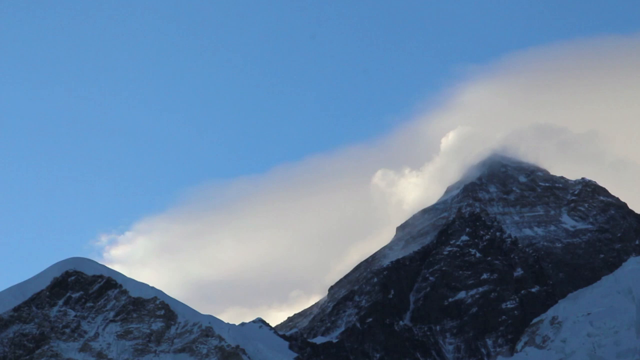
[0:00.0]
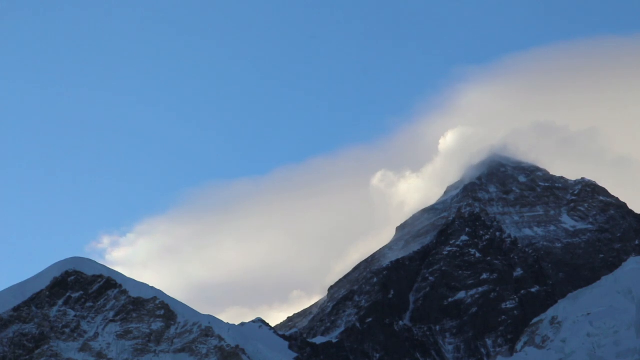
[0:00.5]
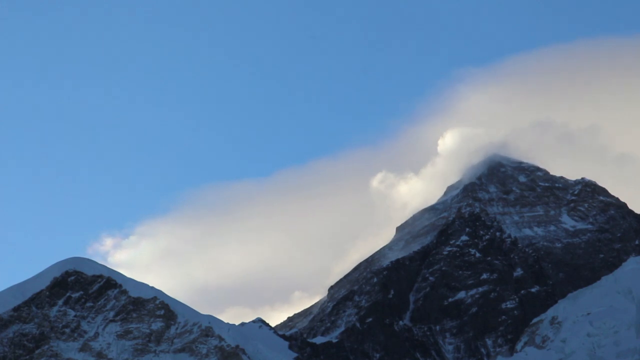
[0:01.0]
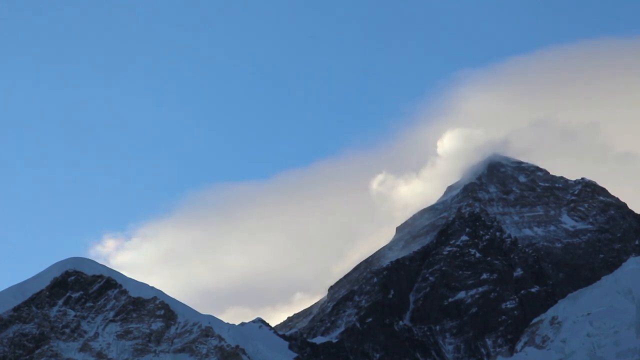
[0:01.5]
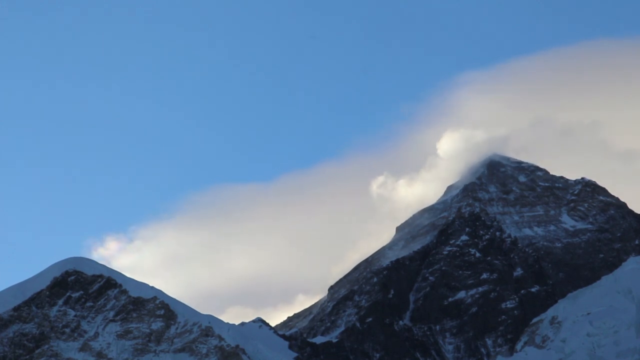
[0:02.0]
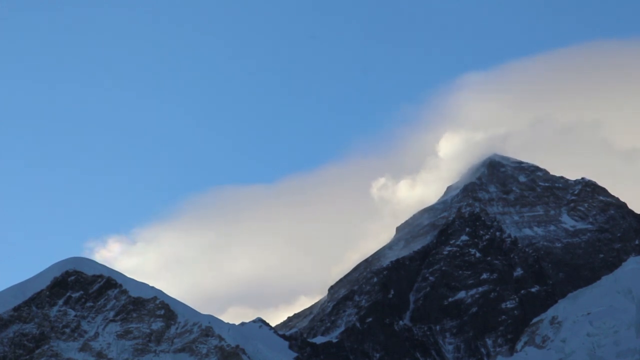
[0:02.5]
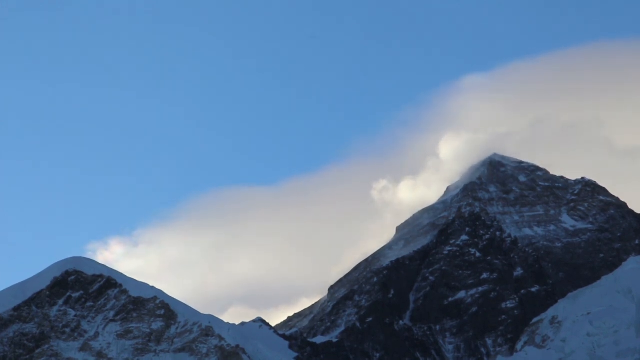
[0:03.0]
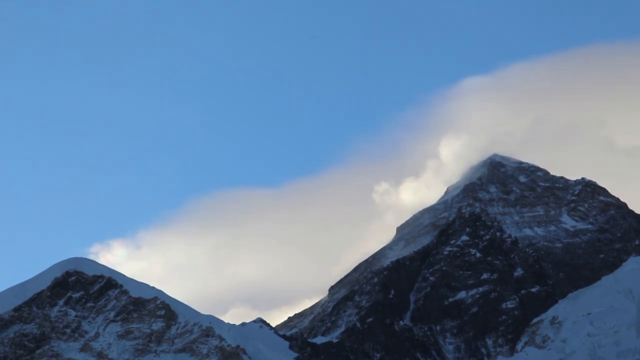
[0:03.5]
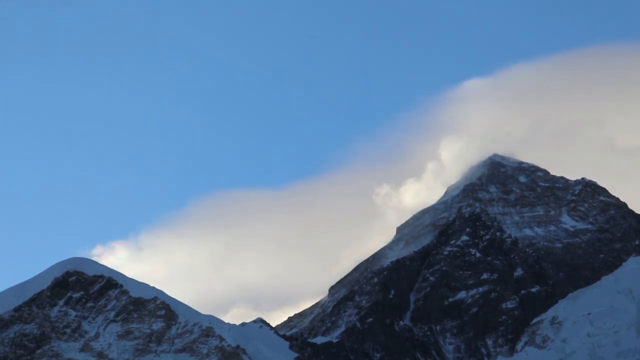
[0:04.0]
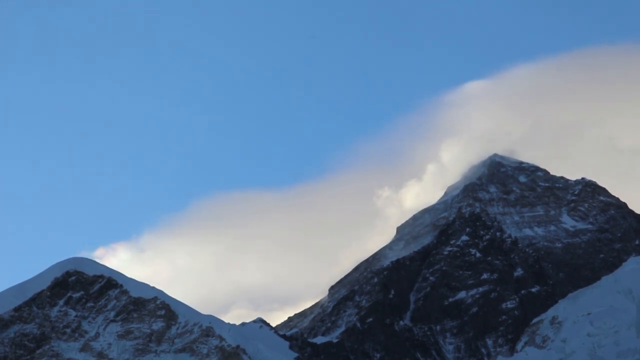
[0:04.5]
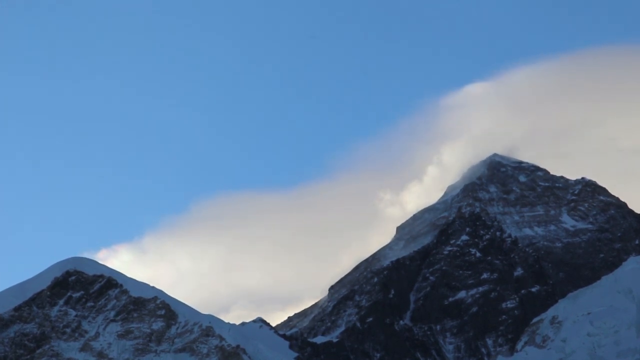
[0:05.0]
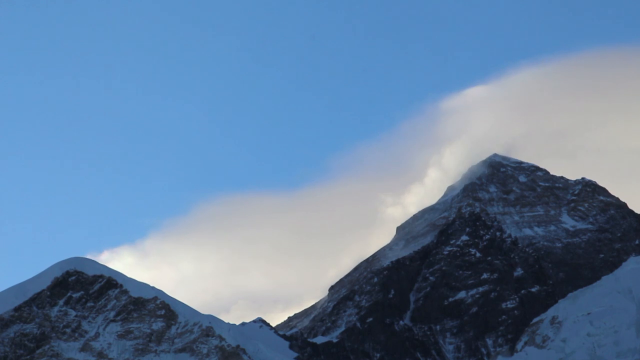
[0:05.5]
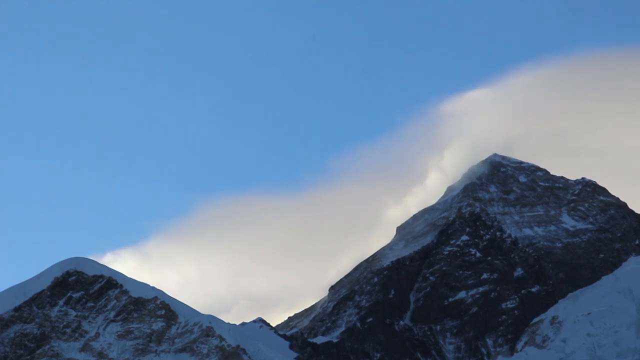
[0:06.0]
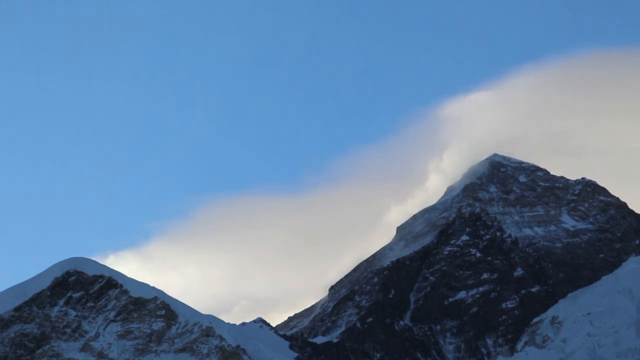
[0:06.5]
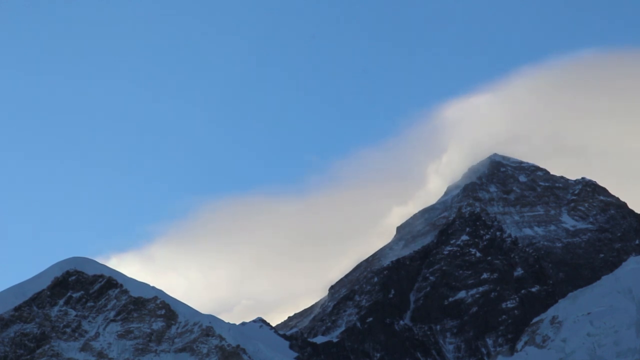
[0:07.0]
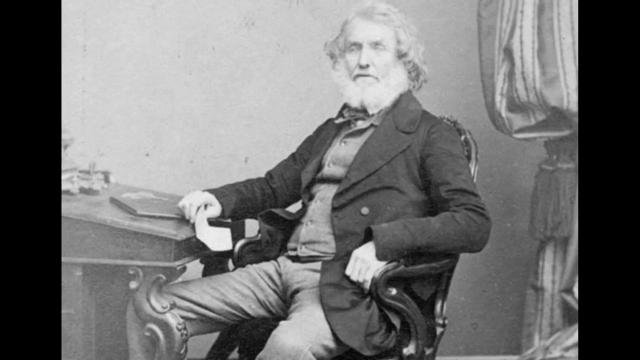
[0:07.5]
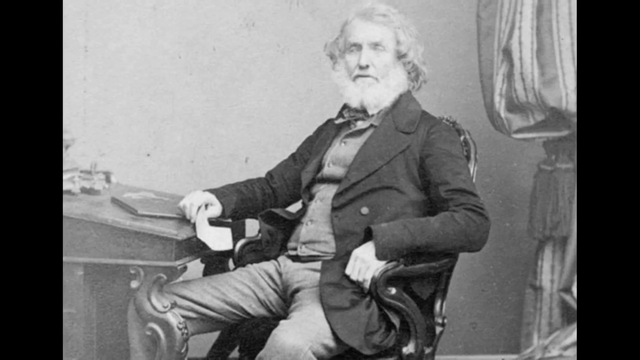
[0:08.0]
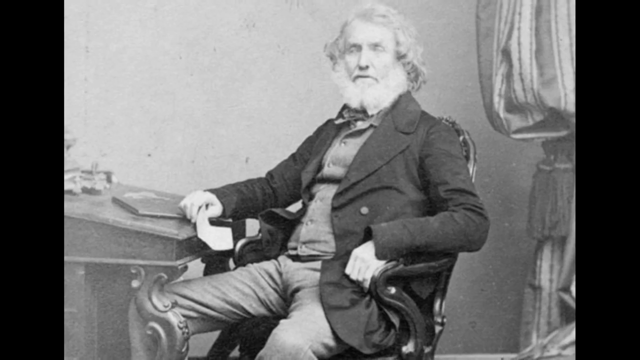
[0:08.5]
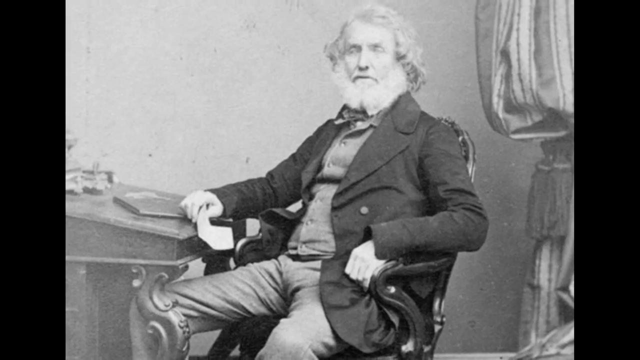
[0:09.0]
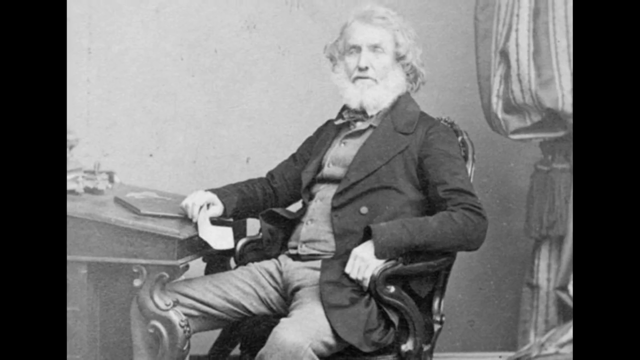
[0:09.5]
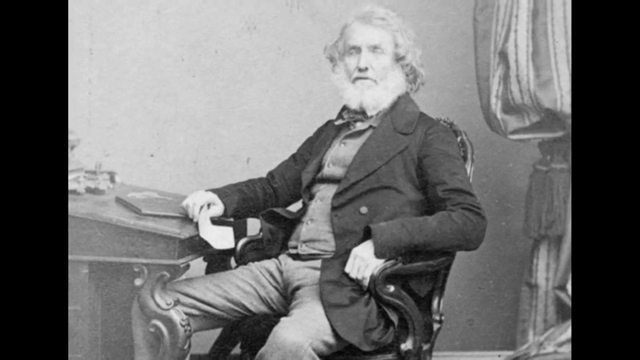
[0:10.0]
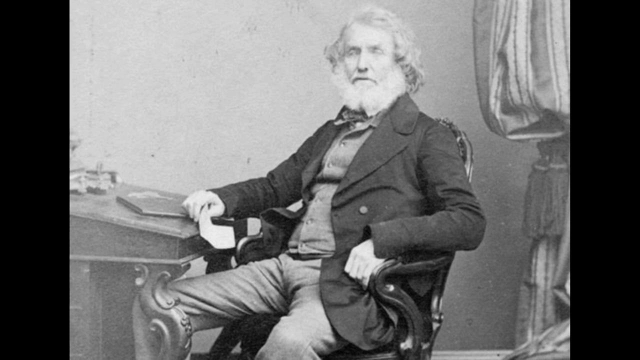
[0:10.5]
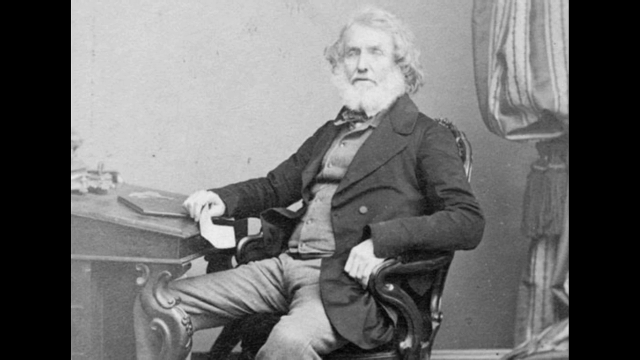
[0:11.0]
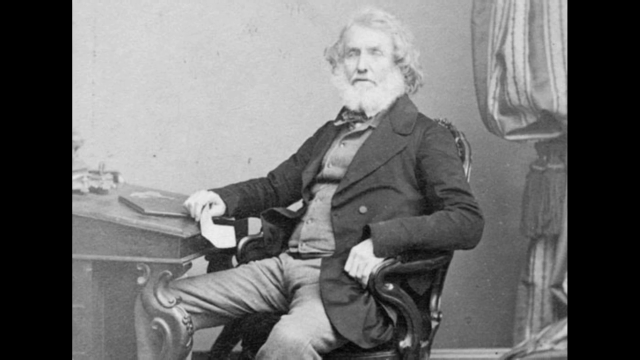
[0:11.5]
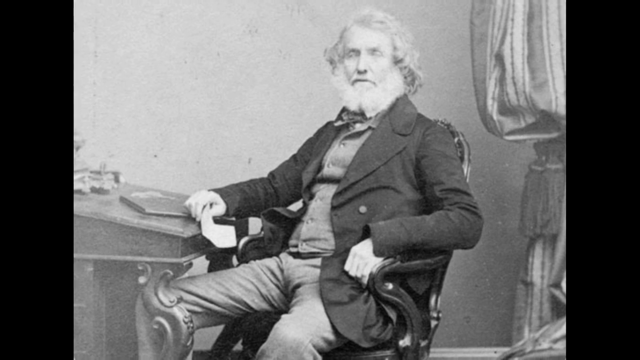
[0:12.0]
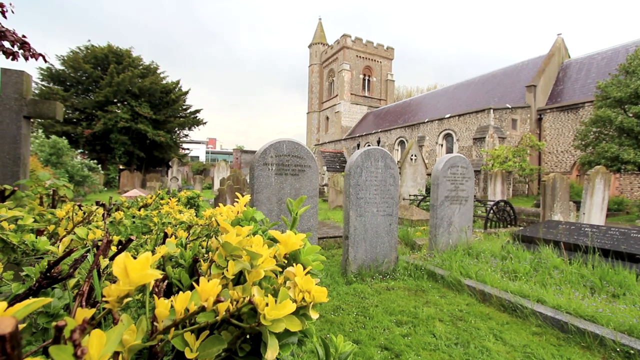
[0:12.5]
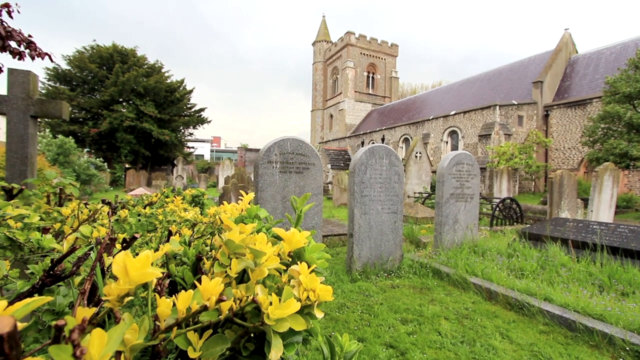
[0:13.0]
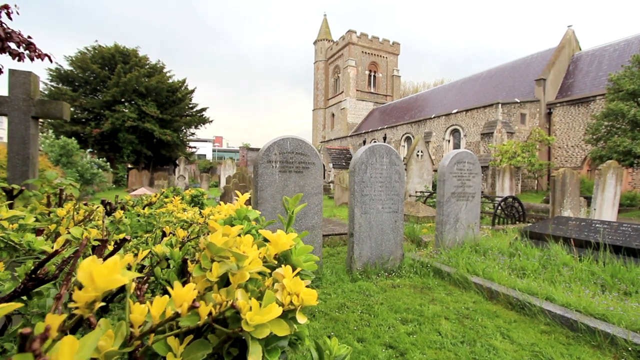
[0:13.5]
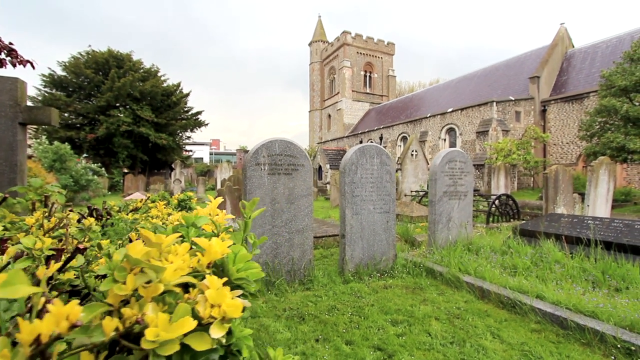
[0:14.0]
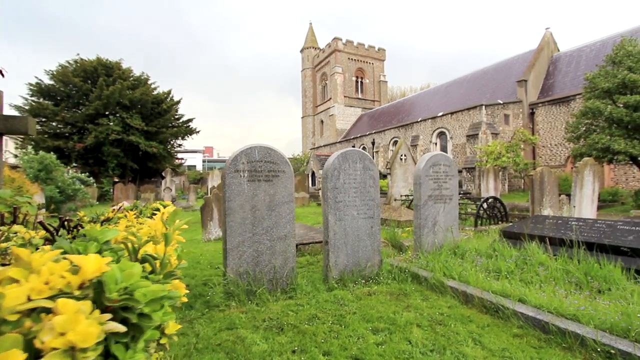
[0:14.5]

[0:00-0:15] The video opens with a picture of two mountains, the taller one on the right, with clouds fading behind it against a baby blue sky. A black and white photograph of a man sitting in a chair follows quickly, then a picture of what looks like a cemetery in a churchyard with several curved, arched headstones, and the view zooms in on those headstones. A different image of the cemetery appears, then different pictures of mountains, then a picture of a white map with black and white lines on it. A different-angle picture of the same mountains with white clouds behind them carries the text "Khanshajunga was the previous holder...", with the rest unreadable. The map returns with the text "The name was suggested by Andrew Scott Waugh." A picture of Colonel Sir George Everest is labeled as never having seen peak XV (peak 15). The video rotates between pictures of the map, zooming in on the white map with lines on it and the words "Mount Everest" in the middle, pictures of the mountains, and pictures of the cemetery showing the churchyard and the headstones from different angles.